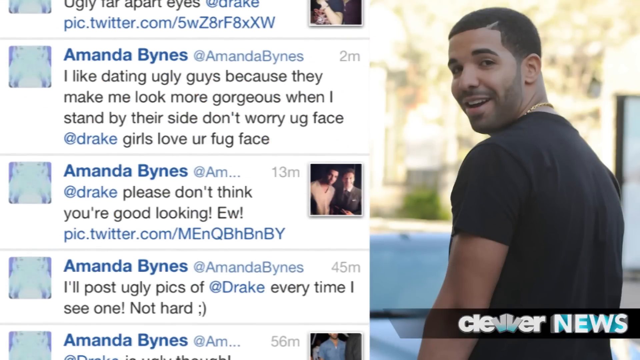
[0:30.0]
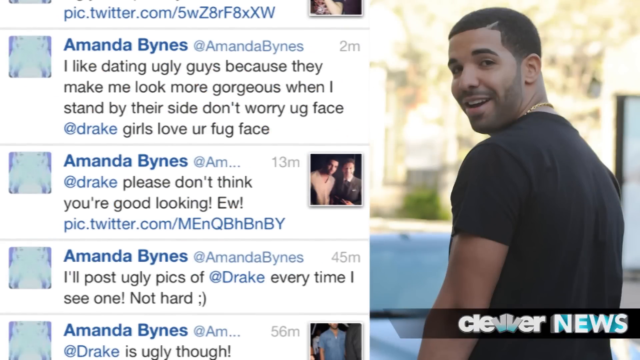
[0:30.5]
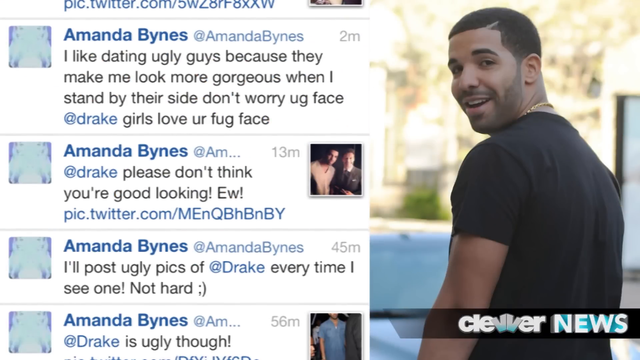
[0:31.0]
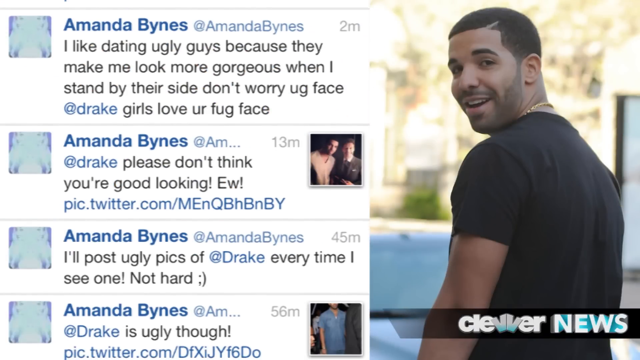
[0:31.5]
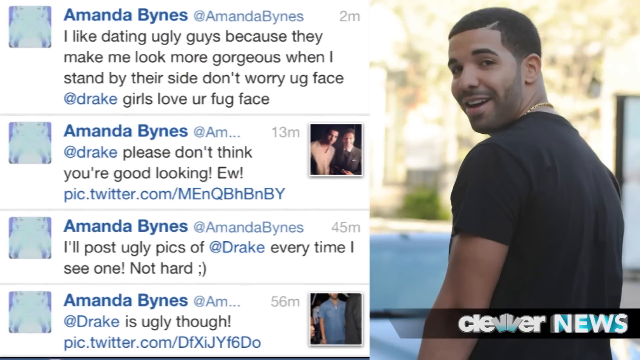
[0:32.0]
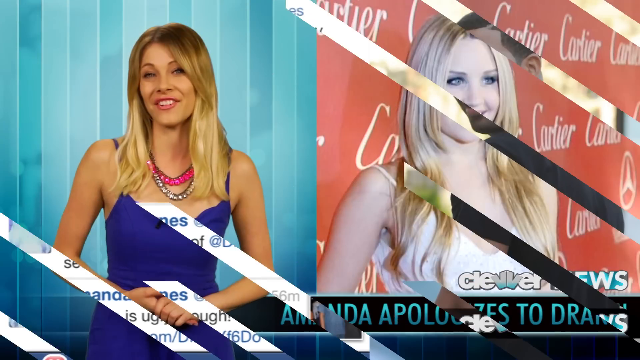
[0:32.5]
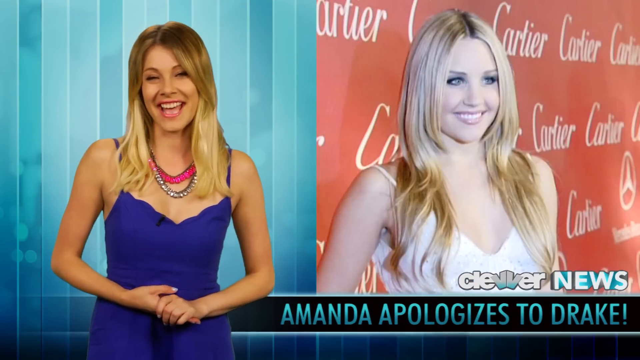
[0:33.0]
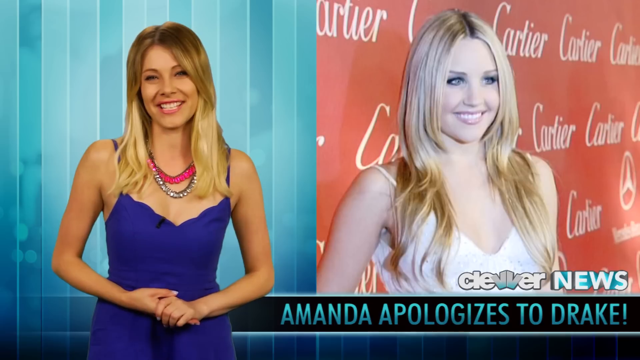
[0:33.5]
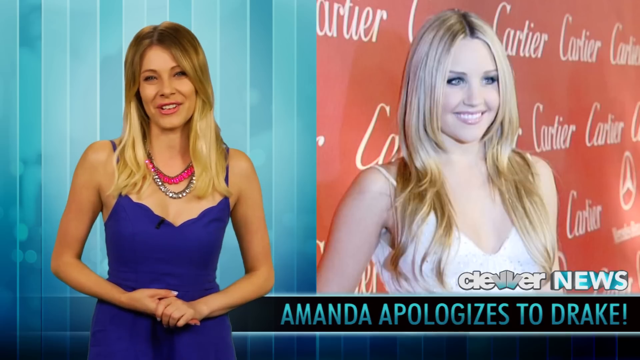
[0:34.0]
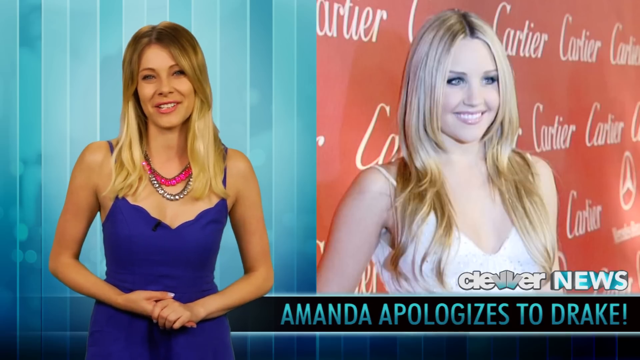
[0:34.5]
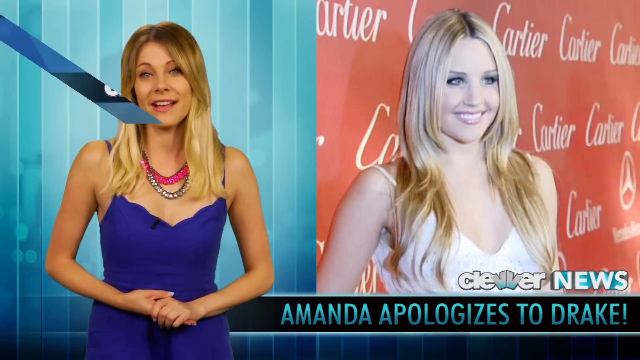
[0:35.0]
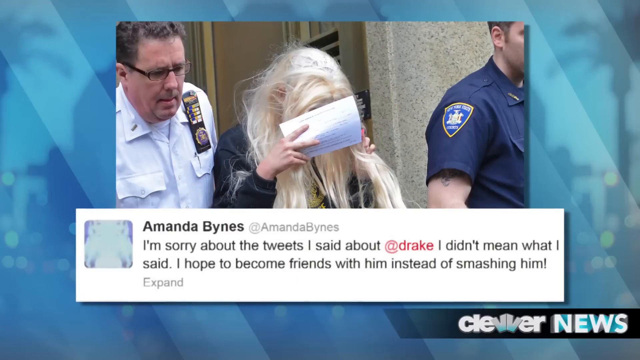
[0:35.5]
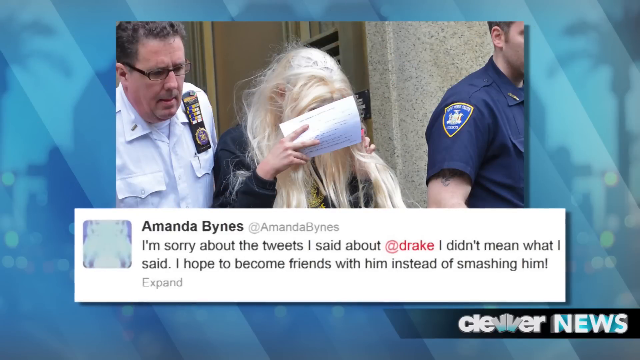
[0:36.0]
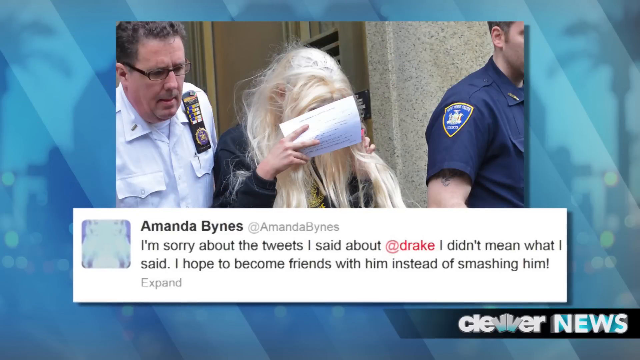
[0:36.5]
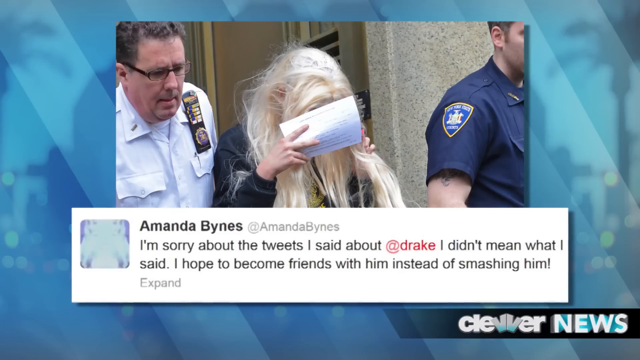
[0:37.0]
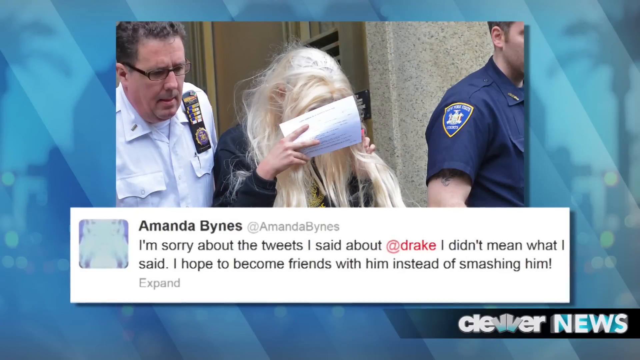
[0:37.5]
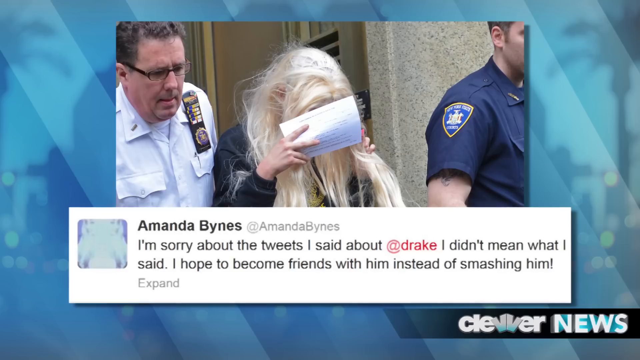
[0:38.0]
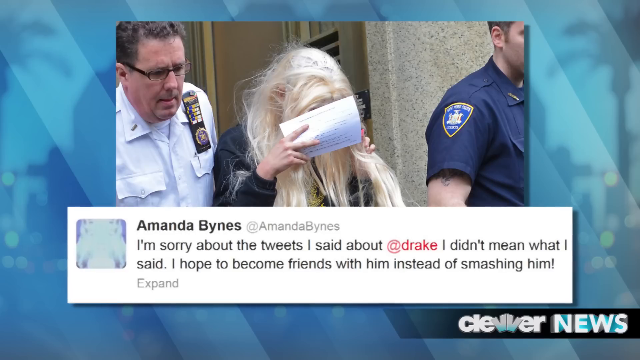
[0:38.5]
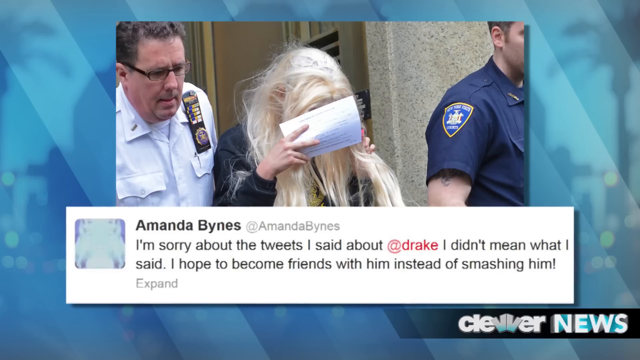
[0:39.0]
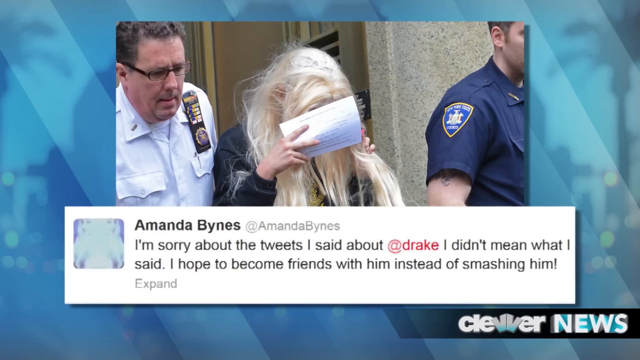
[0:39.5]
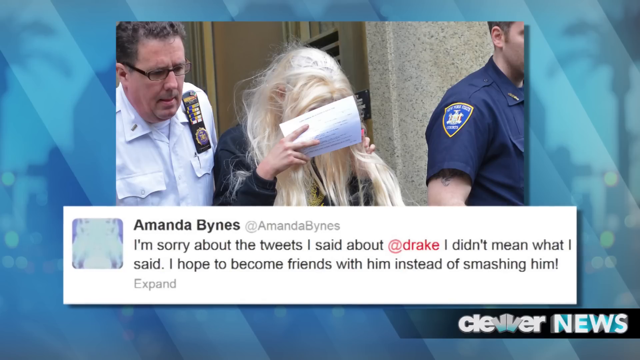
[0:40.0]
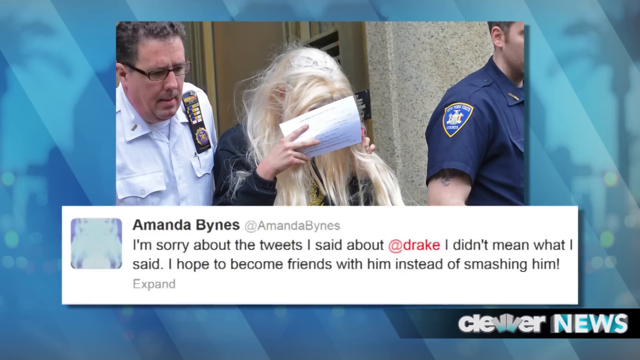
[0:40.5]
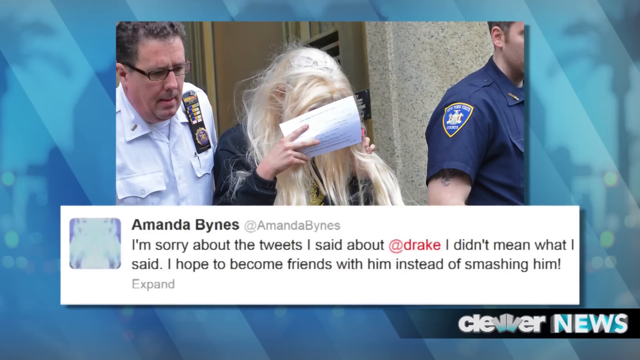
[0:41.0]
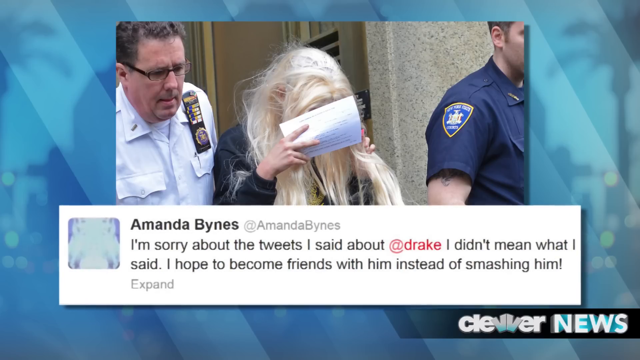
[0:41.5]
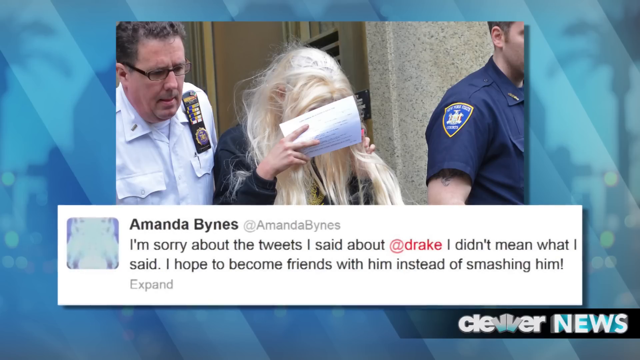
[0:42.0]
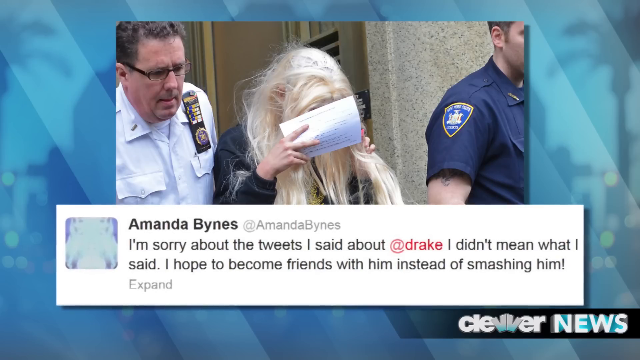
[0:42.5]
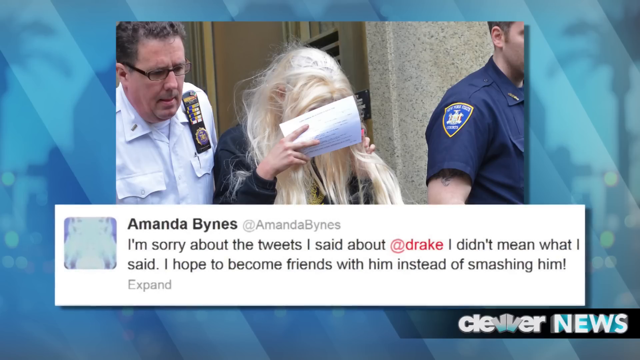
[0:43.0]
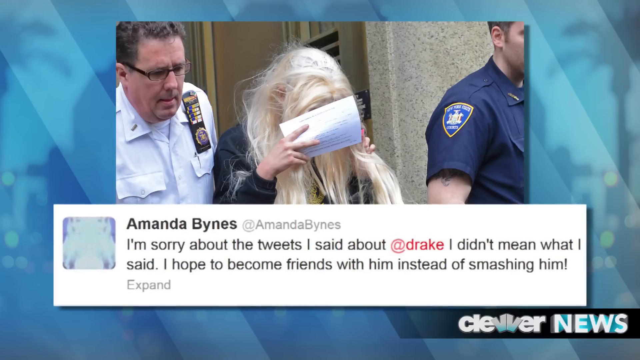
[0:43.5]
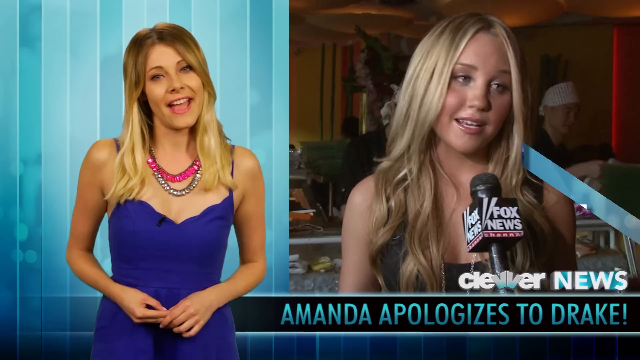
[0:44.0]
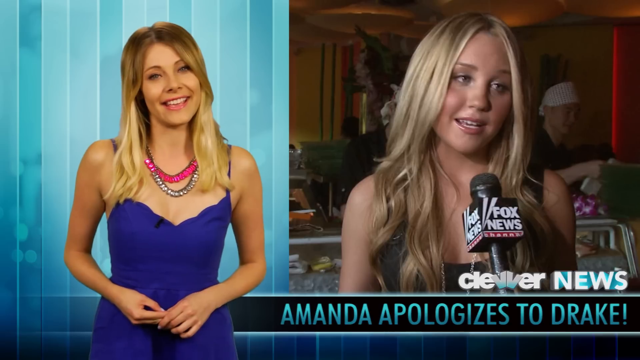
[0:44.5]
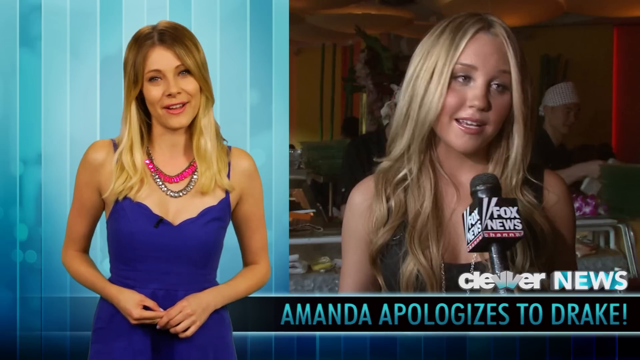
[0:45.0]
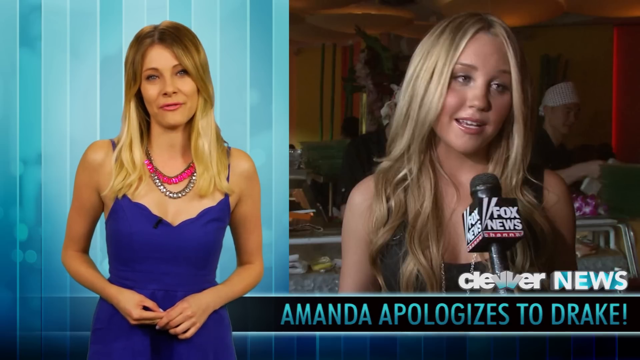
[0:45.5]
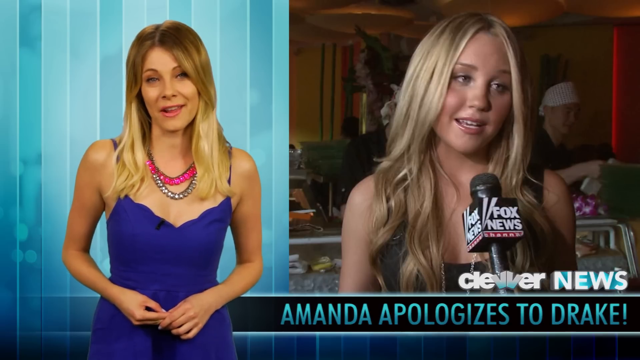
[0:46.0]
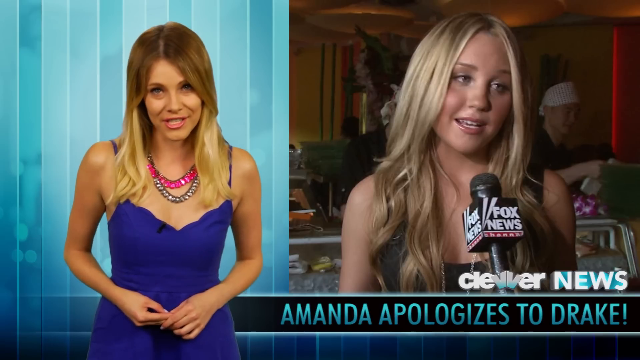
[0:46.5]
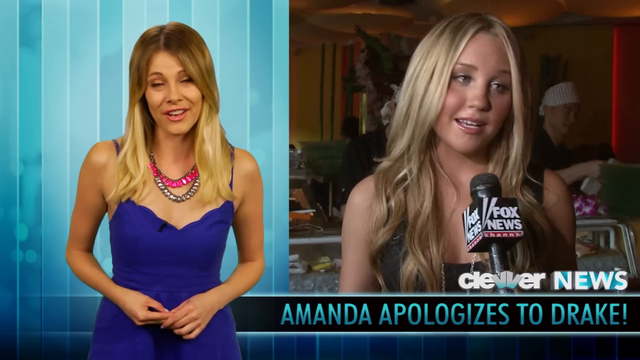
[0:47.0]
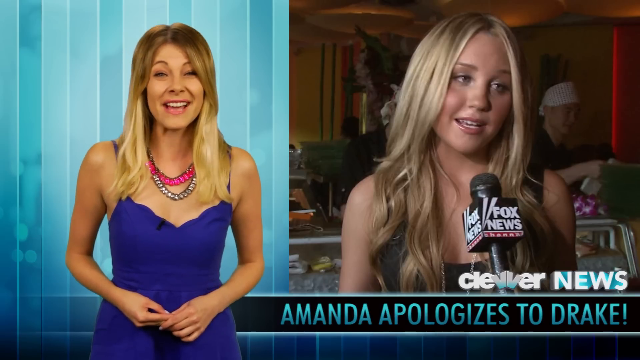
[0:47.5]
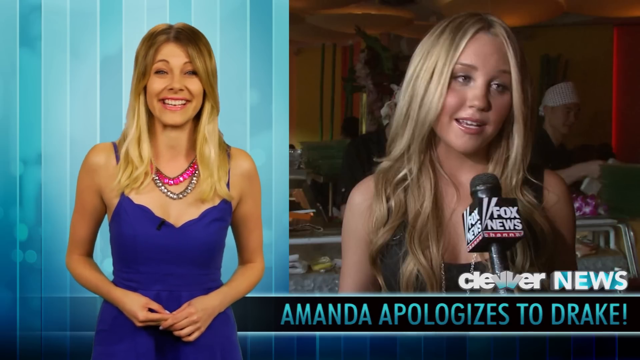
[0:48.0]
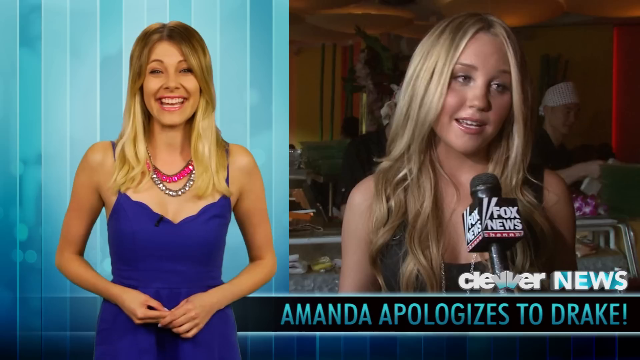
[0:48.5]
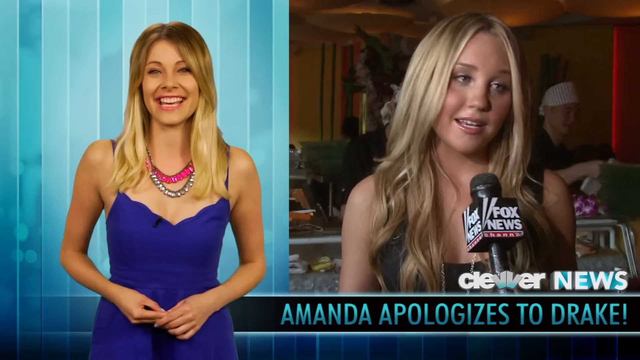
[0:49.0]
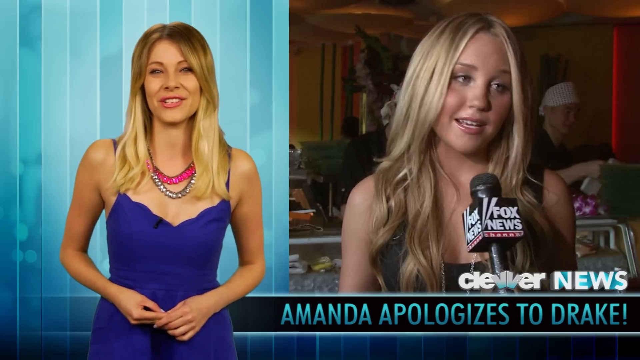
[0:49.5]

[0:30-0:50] A still image of Drake is shown with "Clever News" at the bottom, apparently the name of the news channel reporting this. Amanda Bynes's Twitter posts about Drake appear: "ugly far apart eyes at Drake," "I like dating ugly guys because they make me look more gorgeous when I stand by their side," "please don't think you're good looking," and "I'll post ugly pics of Drake every time I see one, not hard." Then a picture of Amanda Bynes appears with the text "Amanda apologizes to Drake." Next is a picture of her coming out of what looks like a courtroom, with the text "I'm sorry about the tweets I said about Drake. I didn't mean what I said. I hope to become friends with him instead of smashing him."